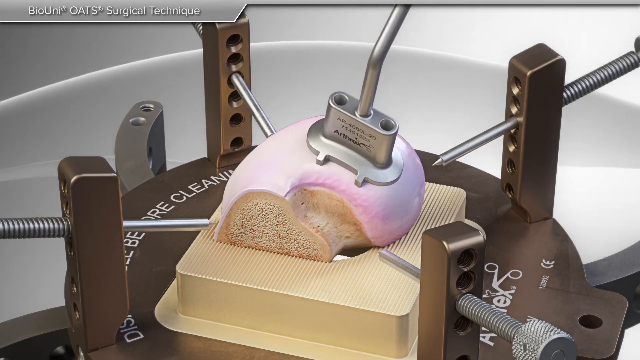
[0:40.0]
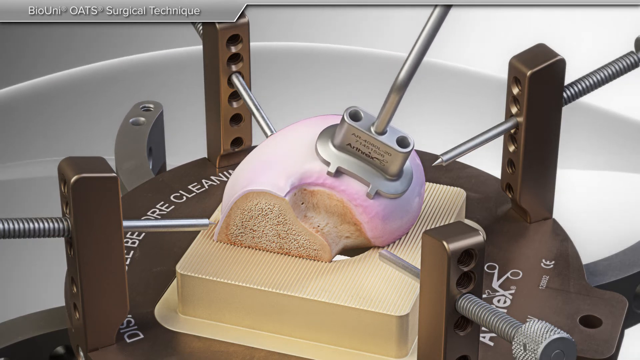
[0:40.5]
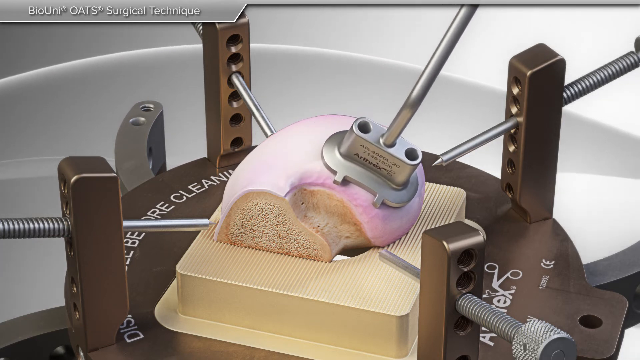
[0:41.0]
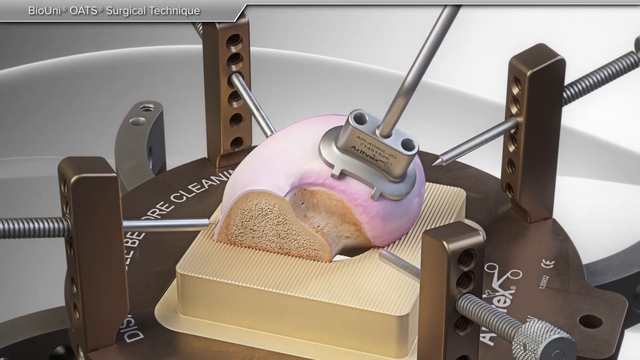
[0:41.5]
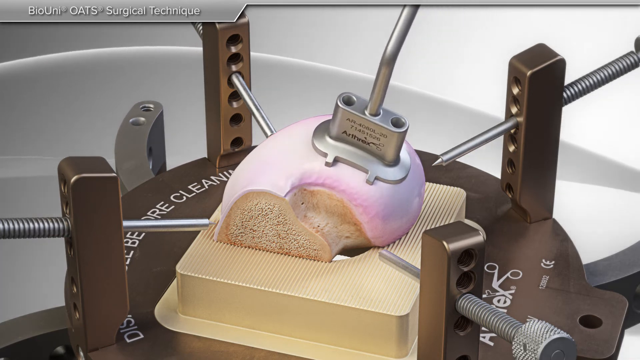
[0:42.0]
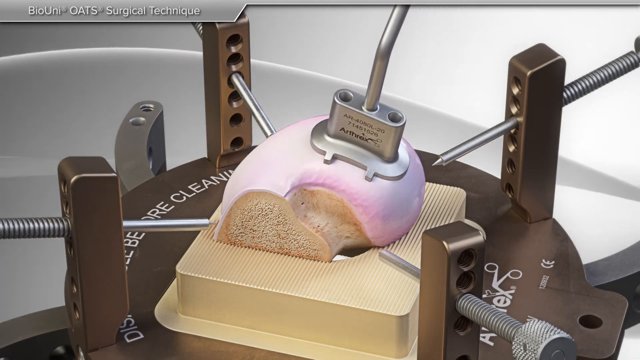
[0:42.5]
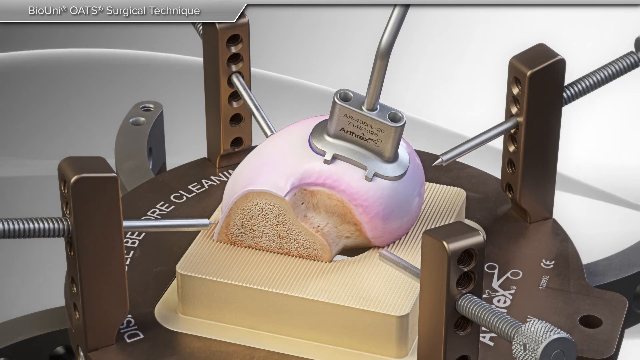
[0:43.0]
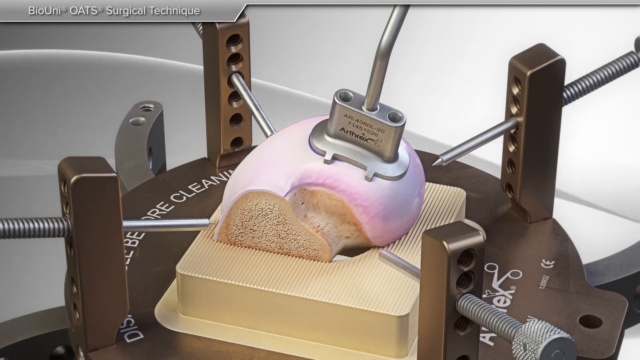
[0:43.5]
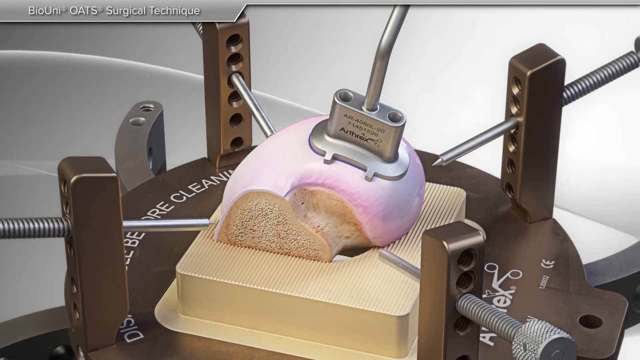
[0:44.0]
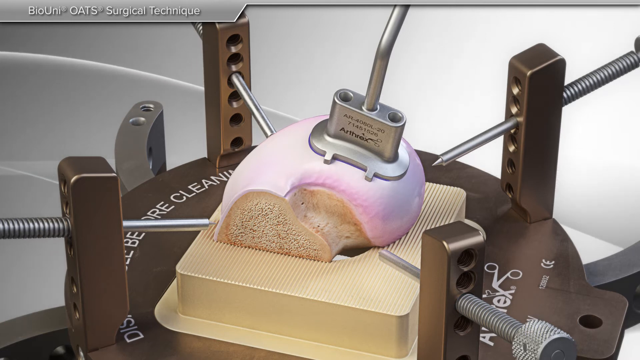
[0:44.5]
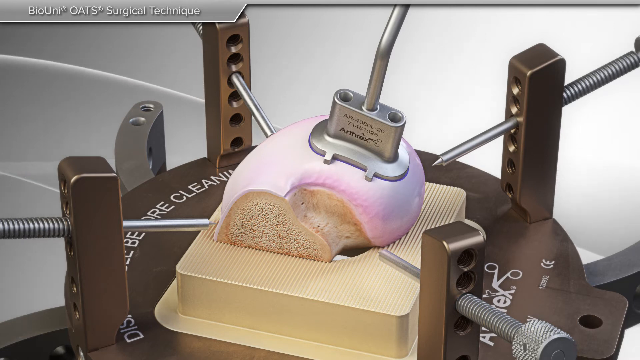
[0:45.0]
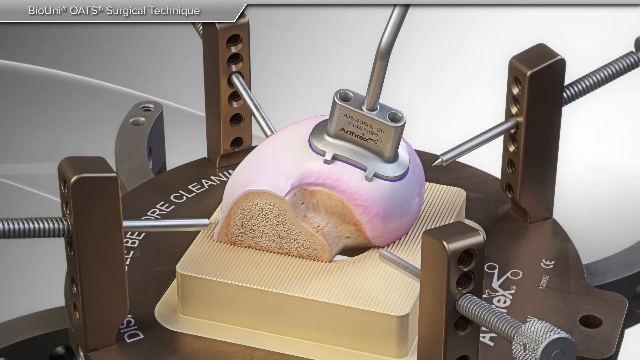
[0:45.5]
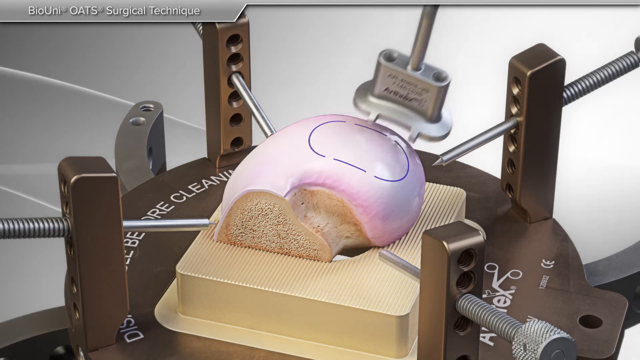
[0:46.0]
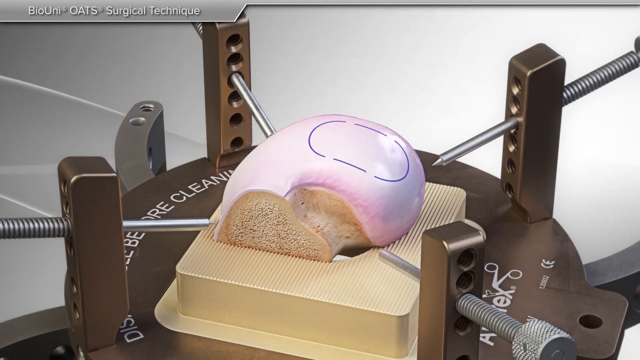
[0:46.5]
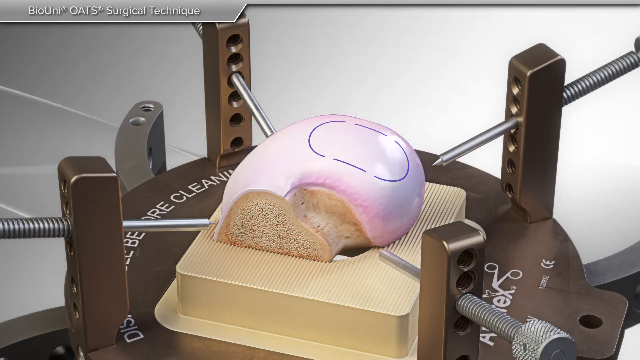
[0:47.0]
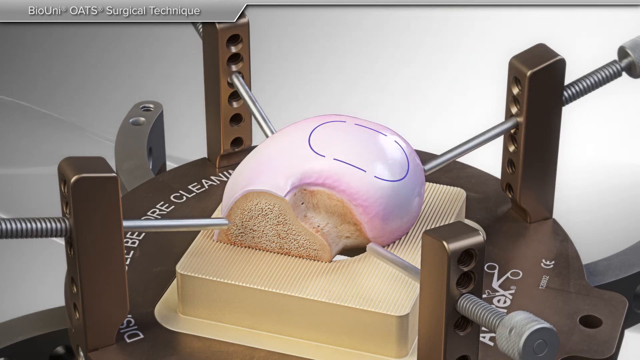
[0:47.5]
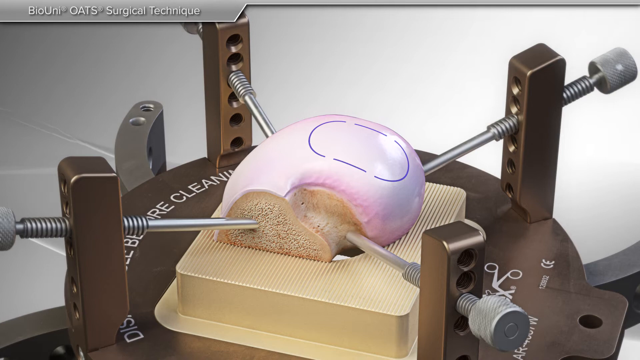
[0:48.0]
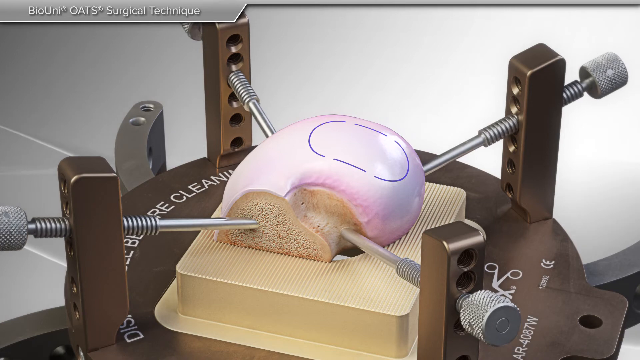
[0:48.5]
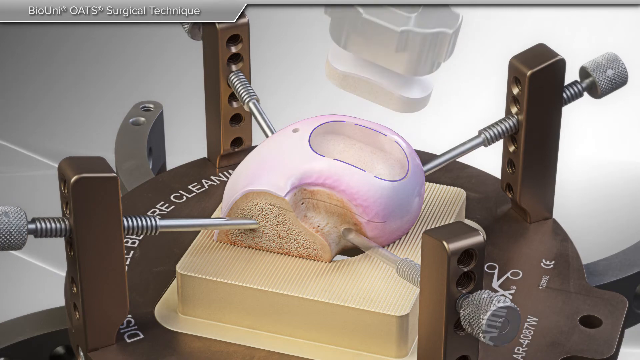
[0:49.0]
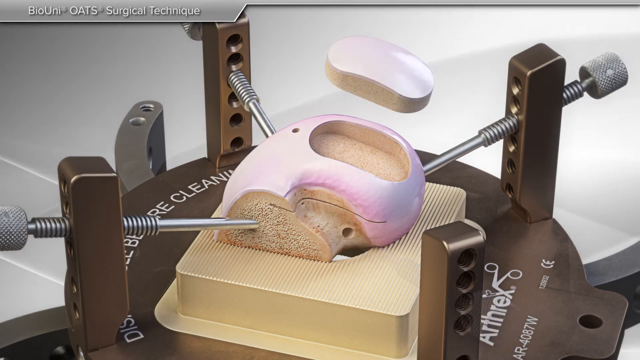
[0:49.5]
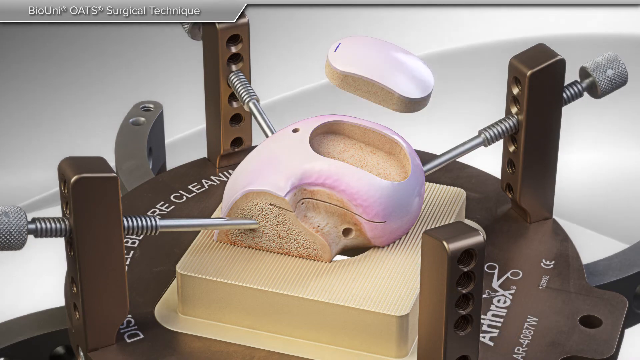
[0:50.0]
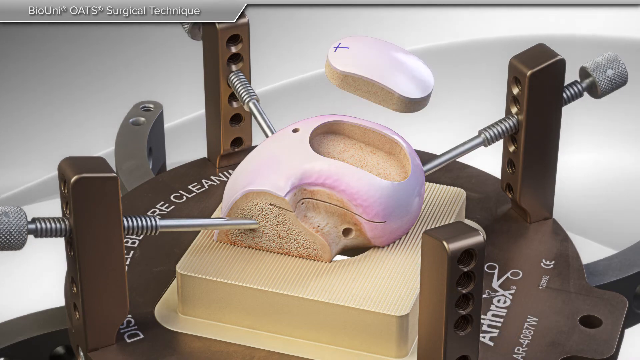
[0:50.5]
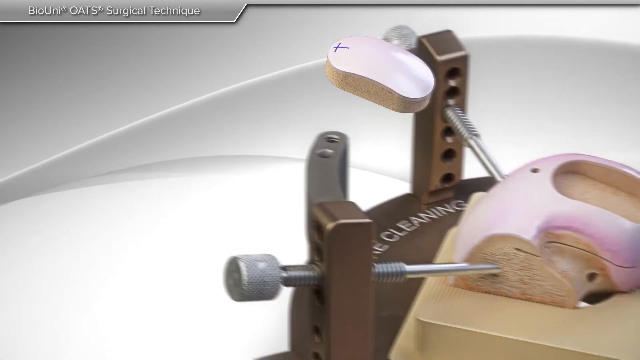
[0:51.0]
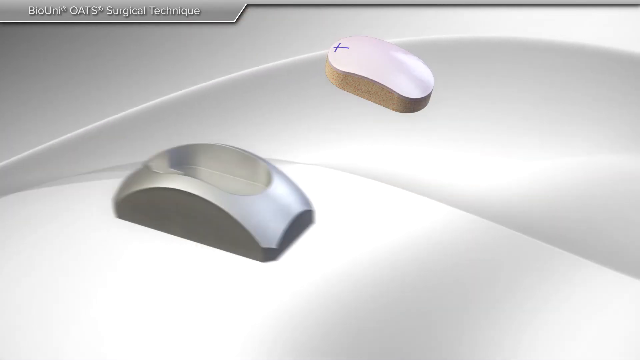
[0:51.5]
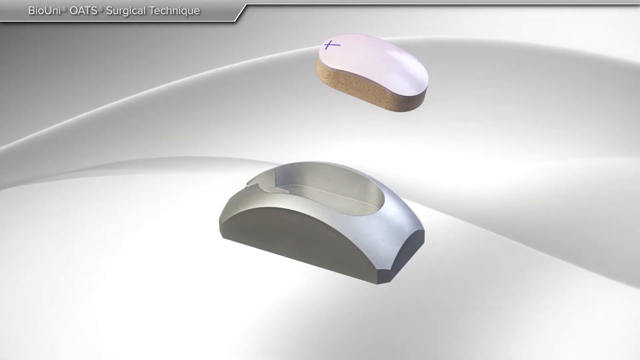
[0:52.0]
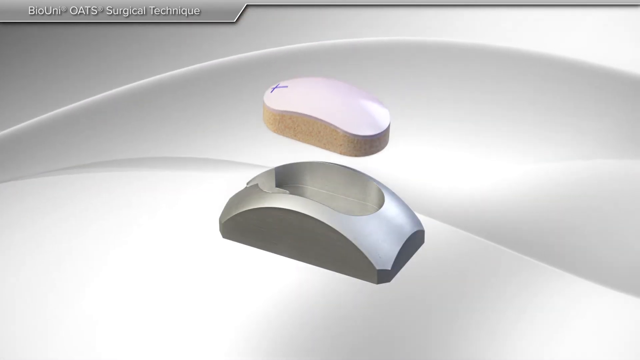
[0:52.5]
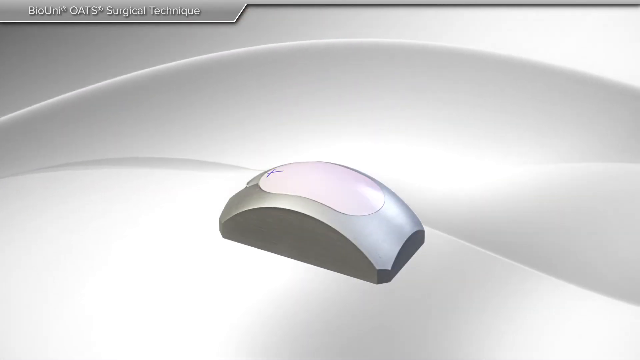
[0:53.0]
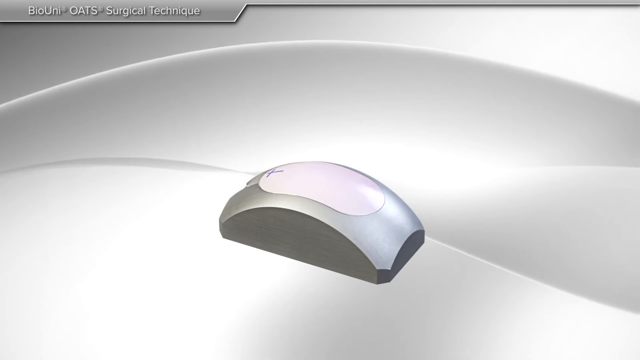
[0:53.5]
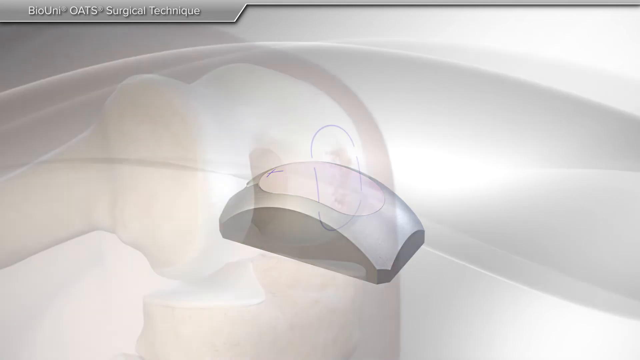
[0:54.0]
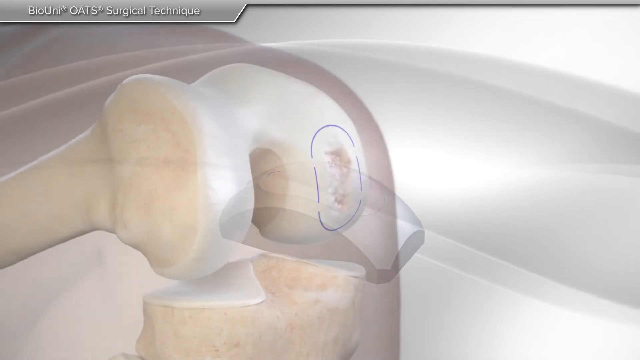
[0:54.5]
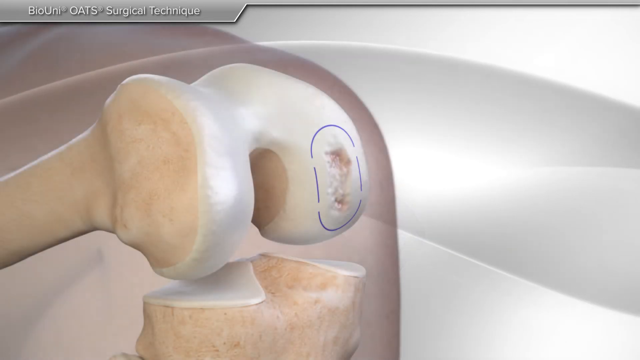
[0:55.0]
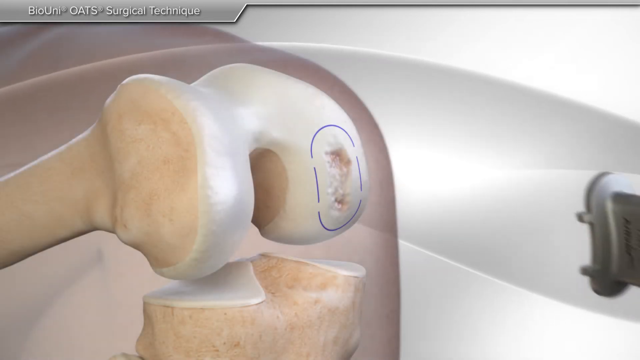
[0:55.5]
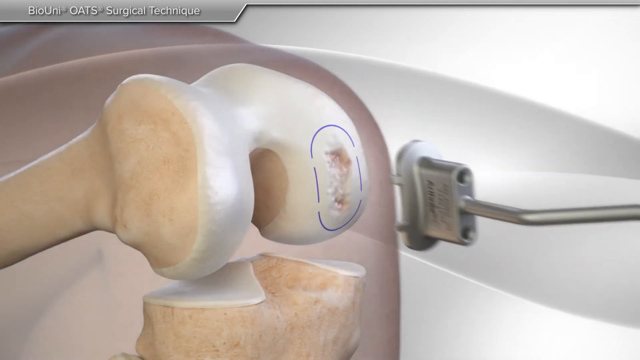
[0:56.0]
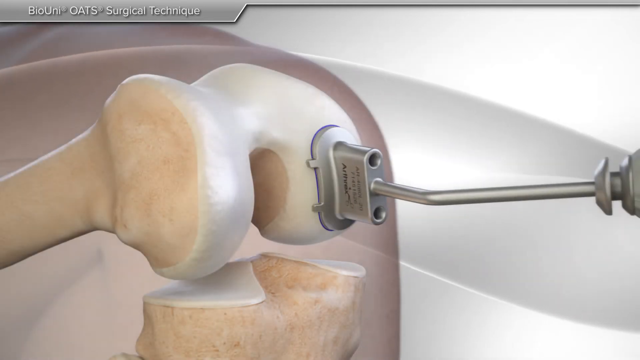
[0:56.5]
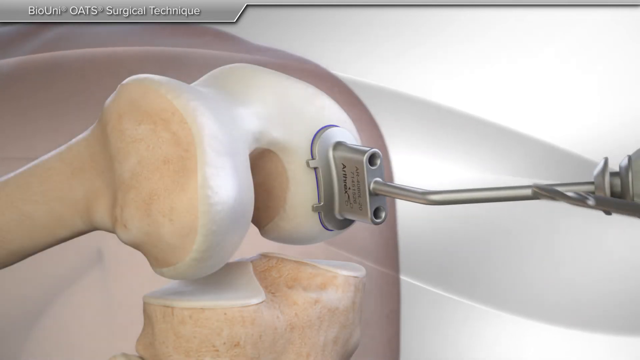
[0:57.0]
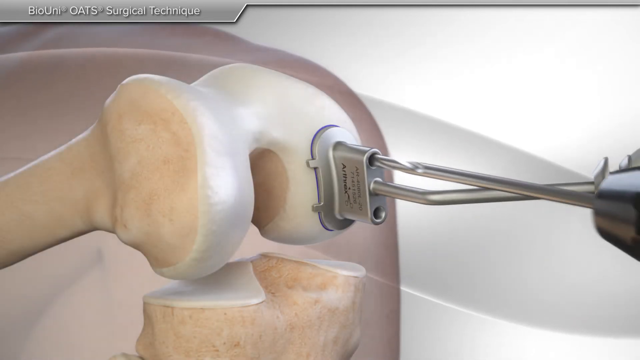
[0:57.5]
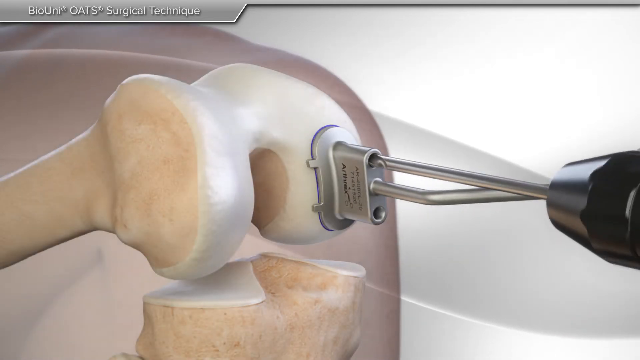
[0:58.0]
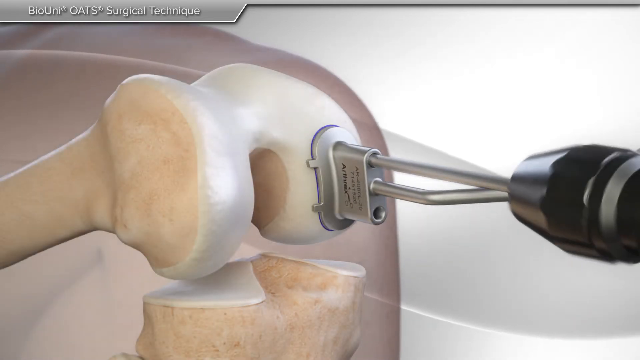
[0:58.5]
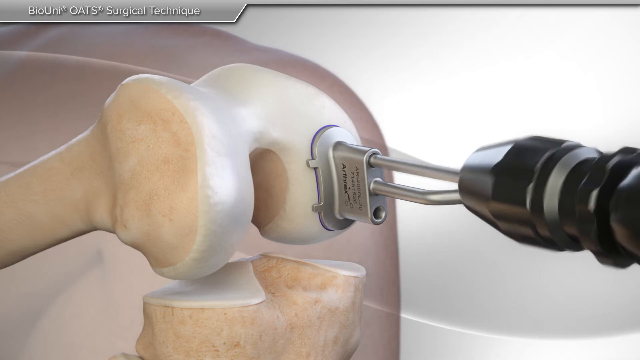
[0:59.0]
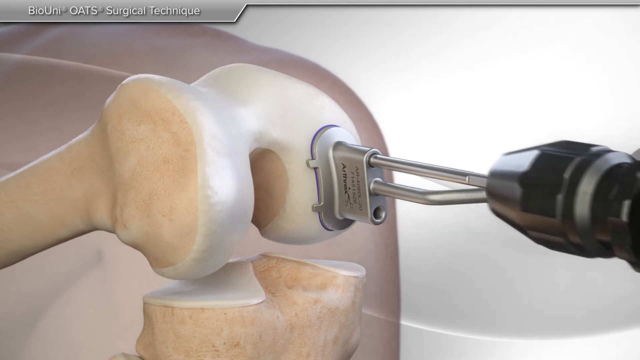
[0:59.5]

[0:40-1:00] The knee joint, which appears to be cut at the front end, is secured in a circular metal stand, with a cream stand on top holding the joint. It is secured by four metal screw rods pointing down at the joint from four pillars attached to the base. A metal kidney-shaped attachment is applied to the top of the donor tissue, shown in pink. It moves around the surface of the joint, a blue line appears around the base of the kidney shape, and the attachment is removed, leaving the blue line behind. The four screws with pointed ends then move forward toward the bone of the knee joint and penetrate it. A section of the kidney-shaped area is removed, and a blue cross is placed at the top left side of the kidney shape. The section is then inserted into a metal object that is an exact match for the portion of knee joint removed. The diagram of the injured knee joint returns, and the silver attachment once again enters the blue-framed area. An implement like a screwdriver enters the top hole above the kidney shape and screws down, and the handle of the screw is removed, leaving a rod.